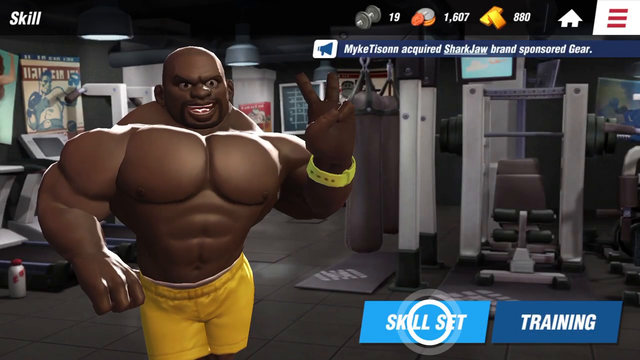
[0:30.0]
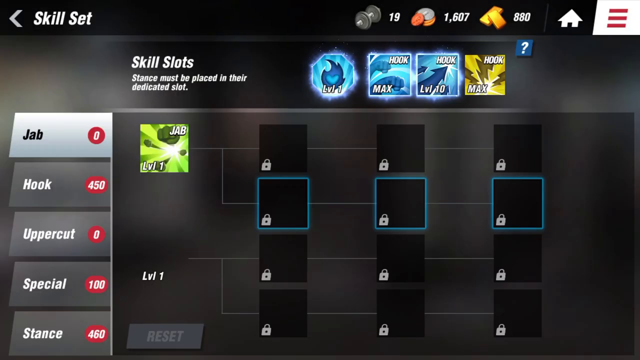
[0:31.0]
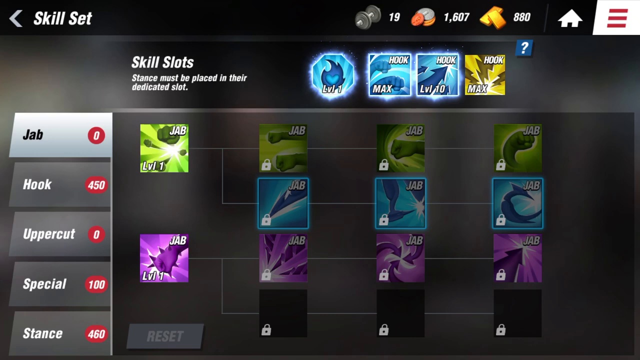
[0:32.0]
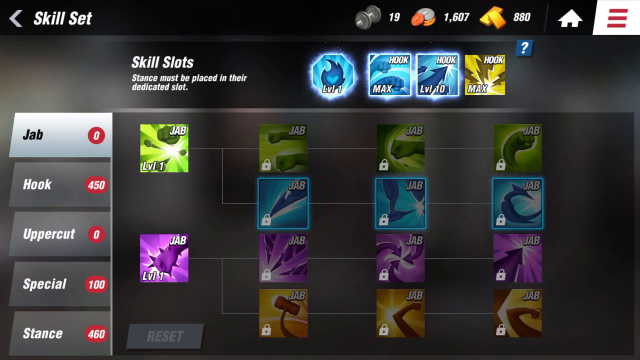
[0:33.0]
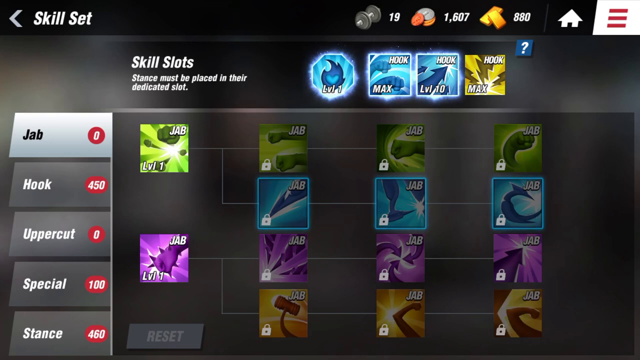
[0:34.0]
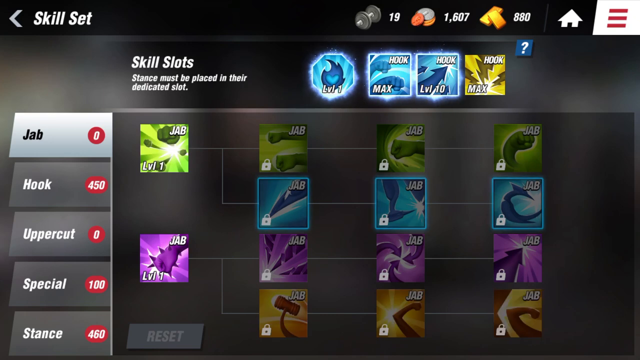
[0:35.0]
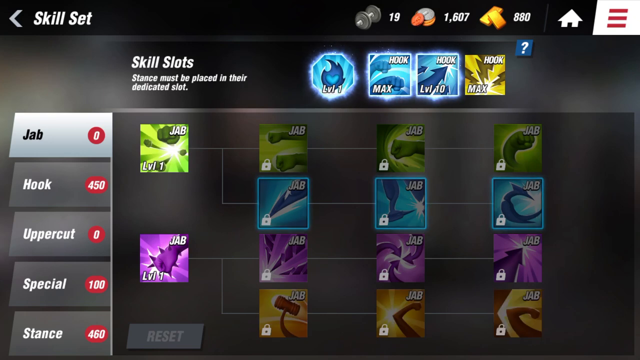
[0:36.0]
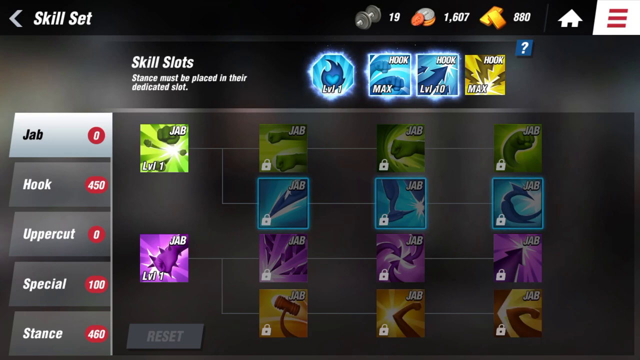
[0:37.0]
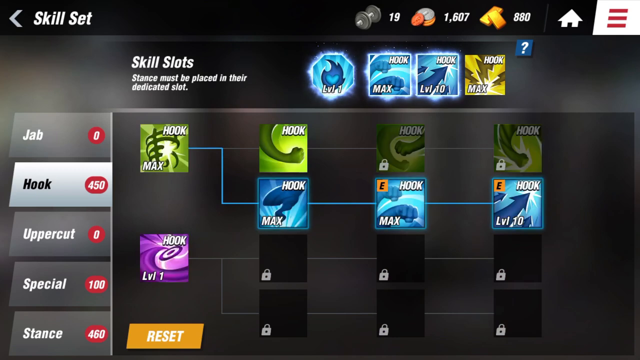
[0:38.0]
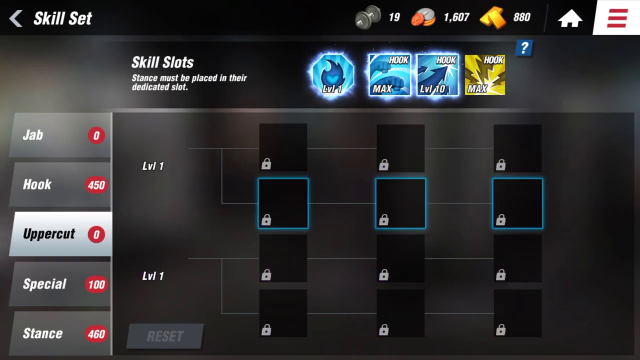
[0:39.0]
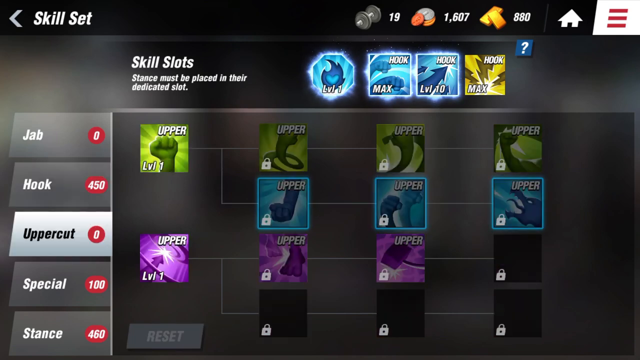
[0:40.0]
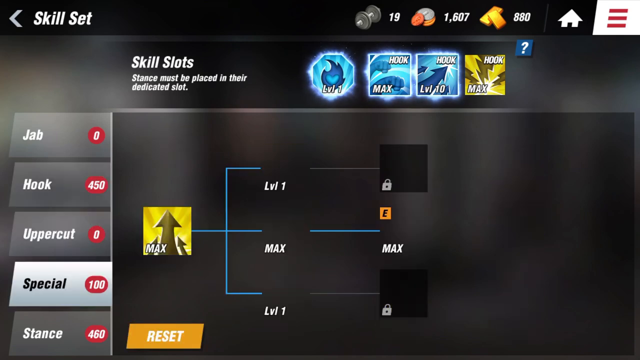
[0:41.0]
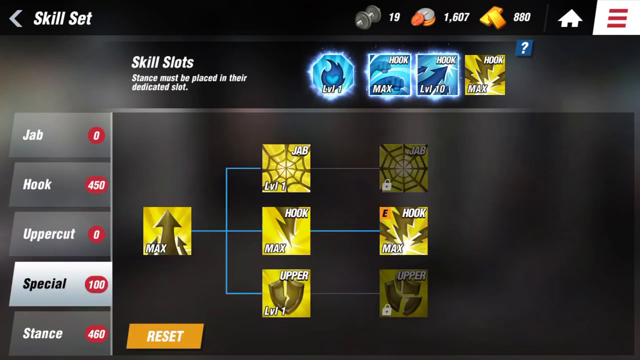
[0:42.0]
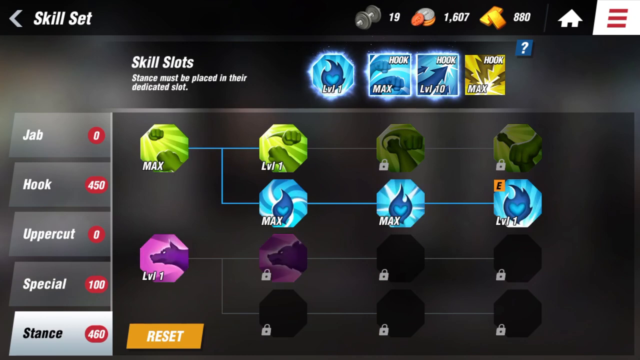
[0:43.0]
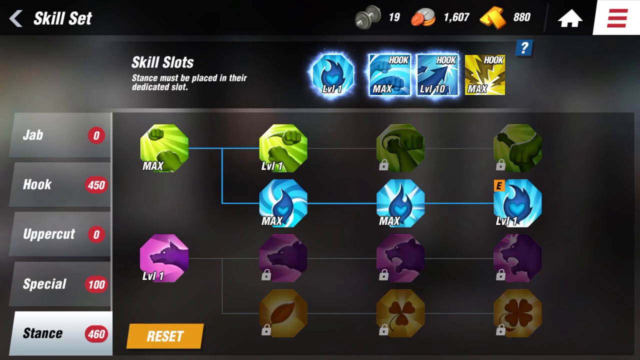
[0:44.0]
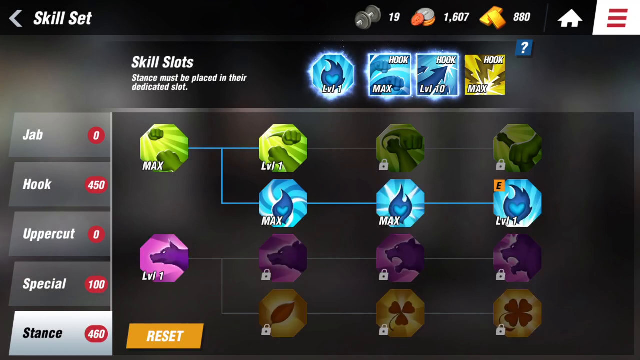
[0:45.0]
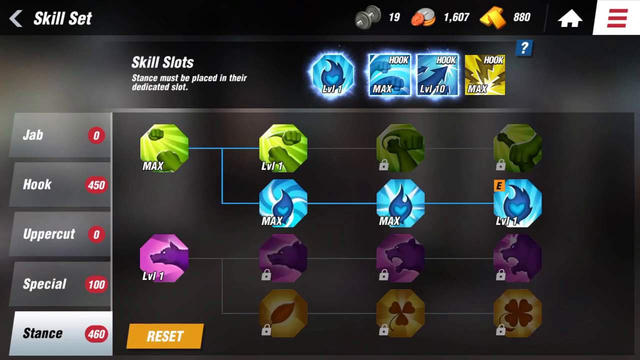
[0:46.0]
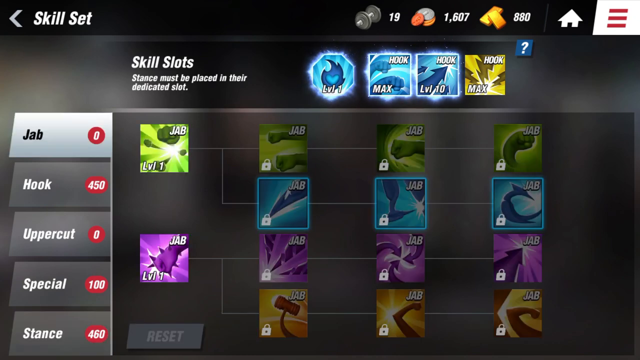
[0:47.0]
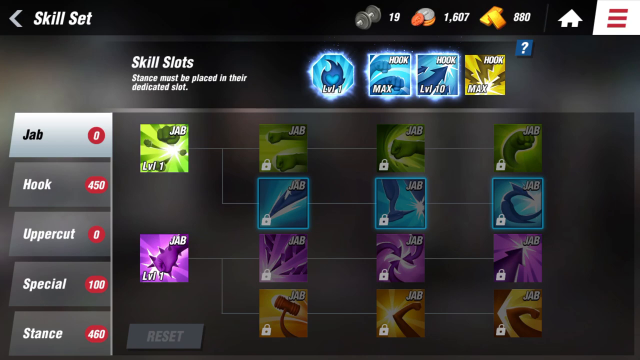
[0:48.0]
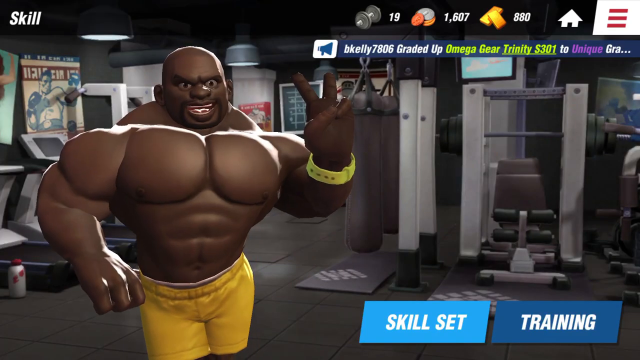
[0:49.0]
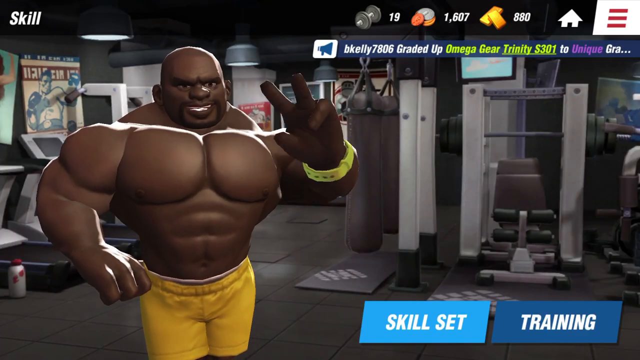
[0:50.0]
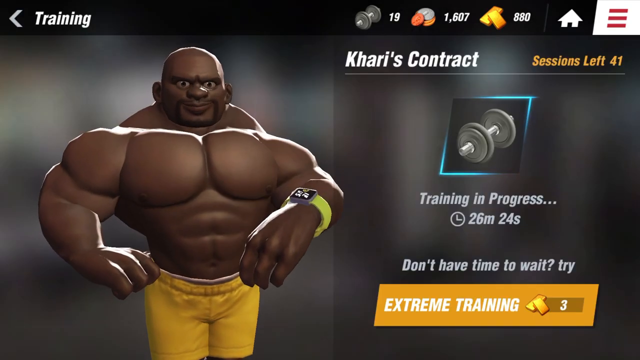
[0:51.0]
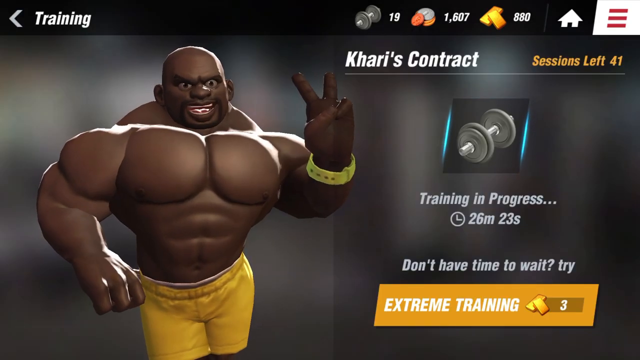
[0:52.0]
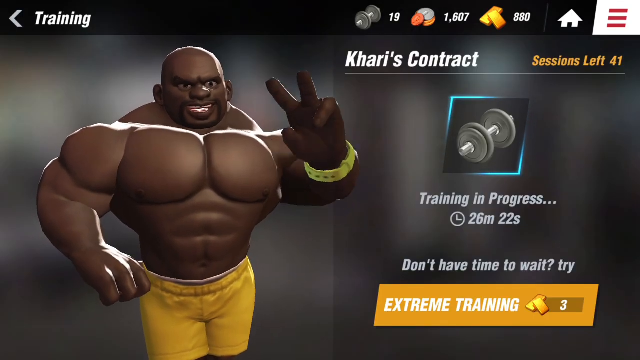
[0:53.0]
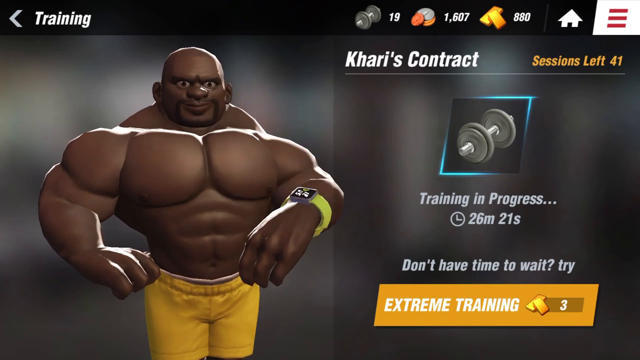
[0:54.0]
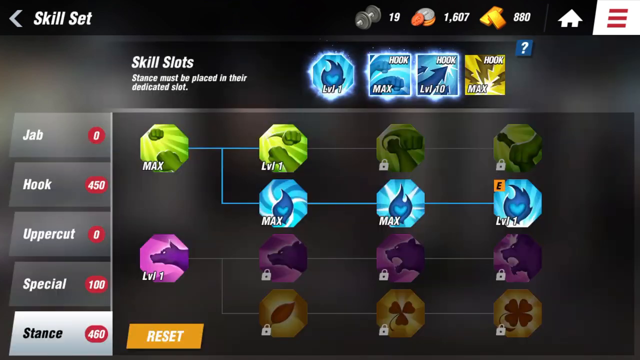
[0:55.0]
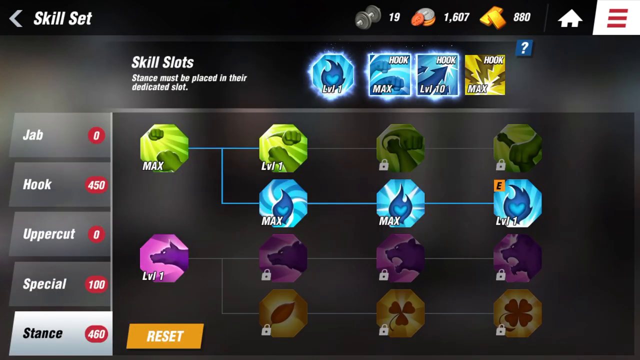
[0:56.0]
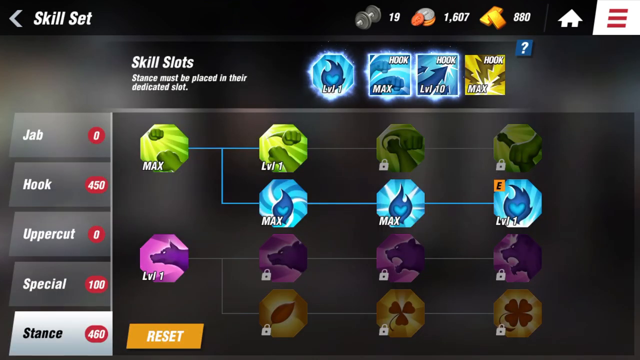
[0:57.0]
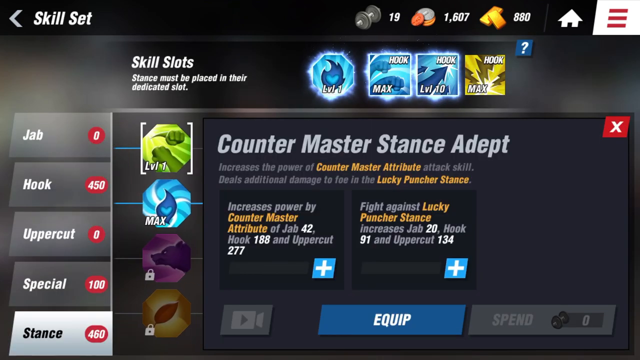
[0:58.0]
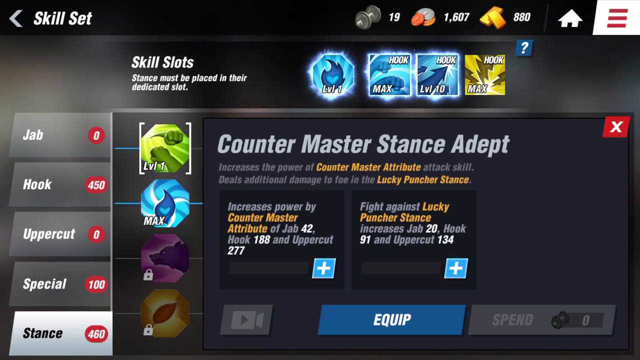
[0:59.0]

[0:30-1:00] The skill page shows a very muscular person wearing yellow shorts and a yellow watch on his right wrist, holding up two fingers in a V. He is in a gym, with treadmills just behind him, a water bottle on the floor, hanging boxing bags and machines such as leg machines. At the top is a barbell or dumbbell icon with "19", along with coins and gold bars, each with numbers next to them, a home icon, and three red lines that look like a menu button. At the bottom are "skill set" and "training" in blue oblongs that look clickable. A banner toward the top shows the name Mike Tyson spelled differently and reads "acquired Shark Jaw brand sponsored gear", with a megaphone icon; it seems to be some kind of notification.